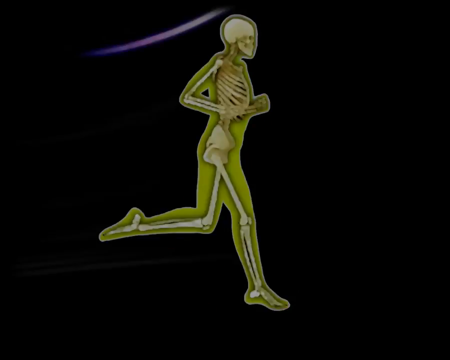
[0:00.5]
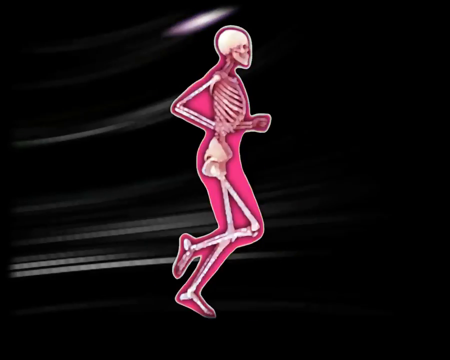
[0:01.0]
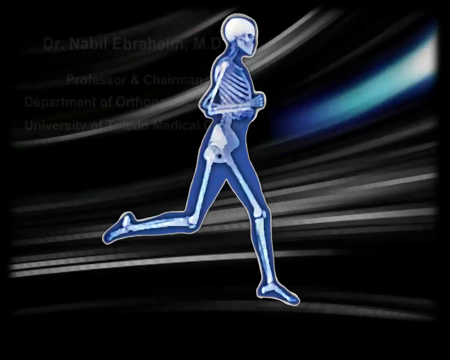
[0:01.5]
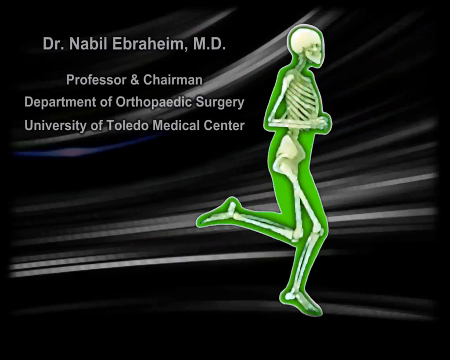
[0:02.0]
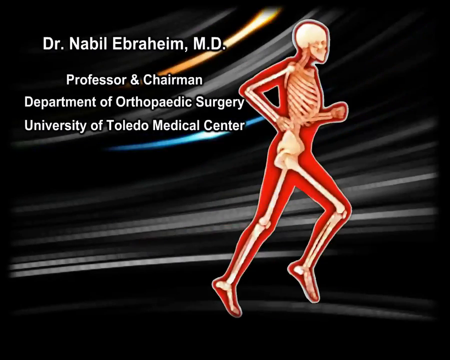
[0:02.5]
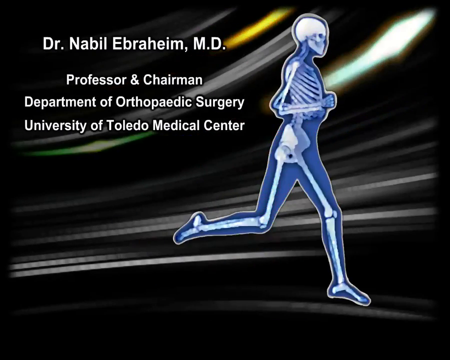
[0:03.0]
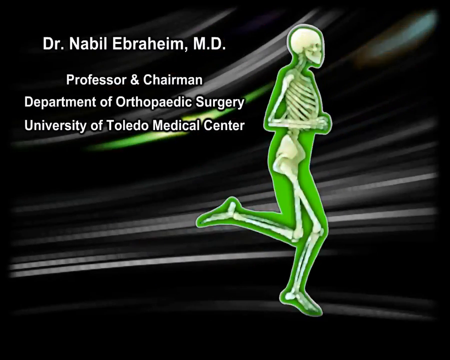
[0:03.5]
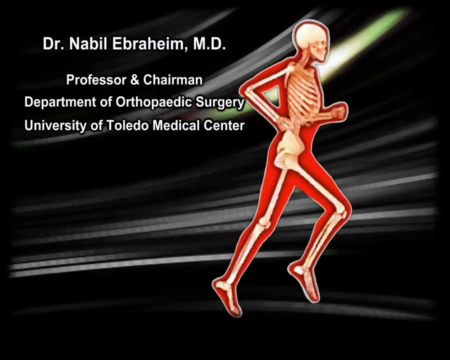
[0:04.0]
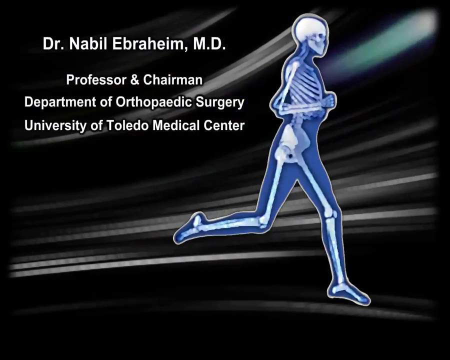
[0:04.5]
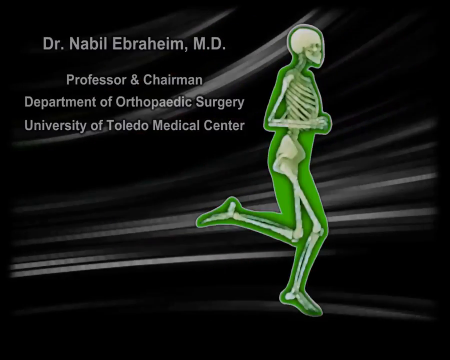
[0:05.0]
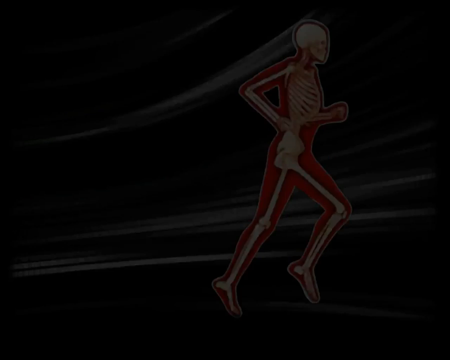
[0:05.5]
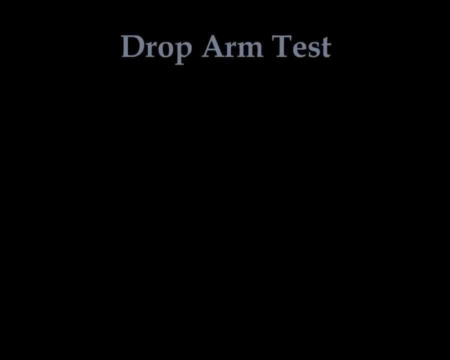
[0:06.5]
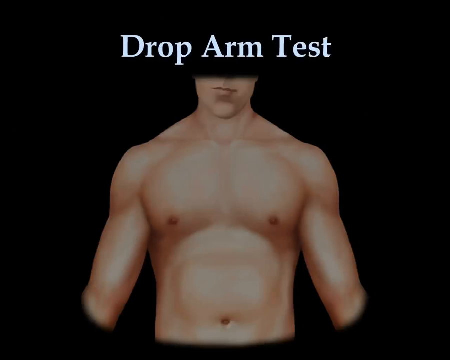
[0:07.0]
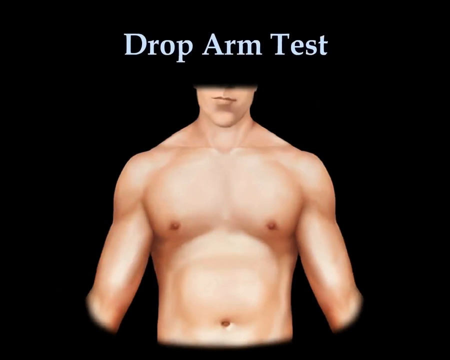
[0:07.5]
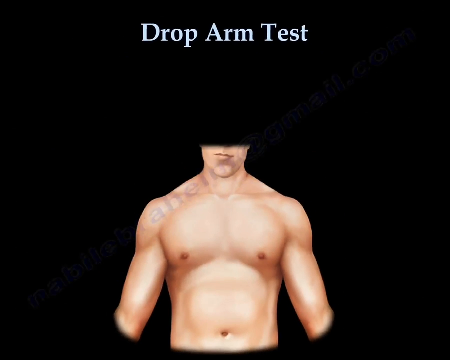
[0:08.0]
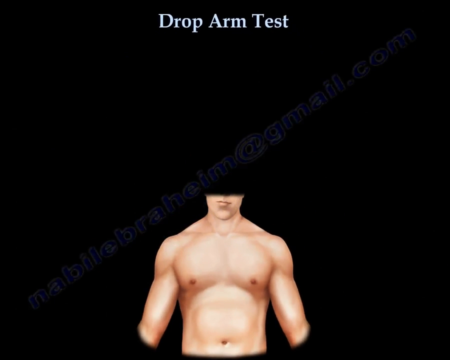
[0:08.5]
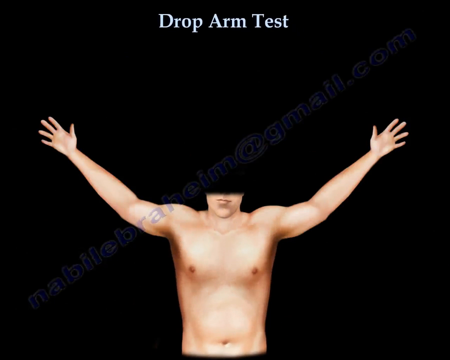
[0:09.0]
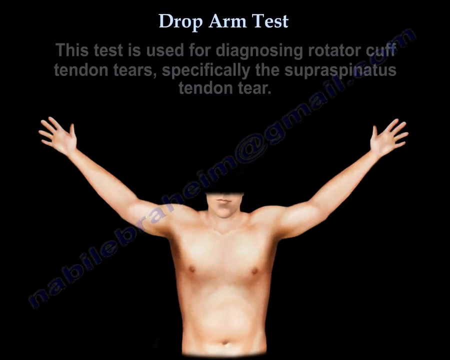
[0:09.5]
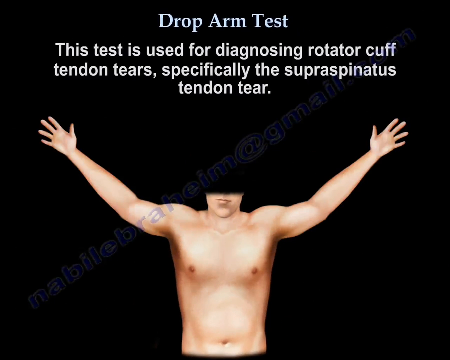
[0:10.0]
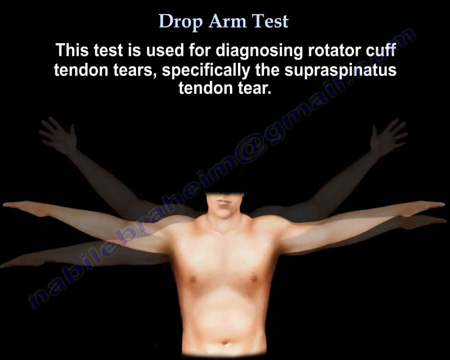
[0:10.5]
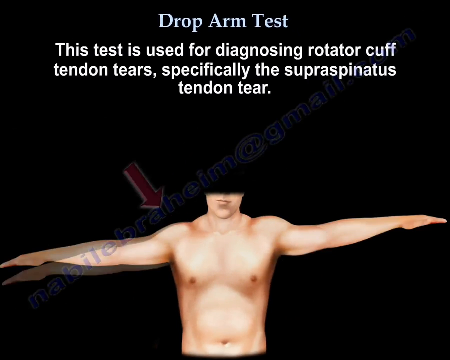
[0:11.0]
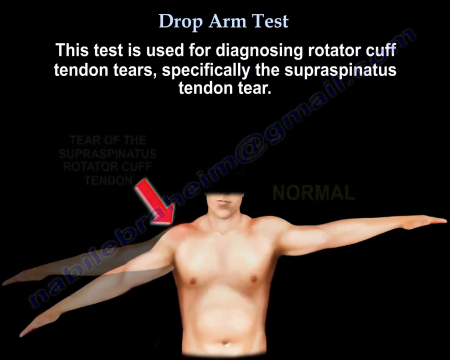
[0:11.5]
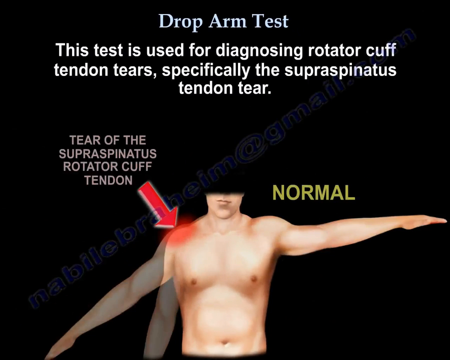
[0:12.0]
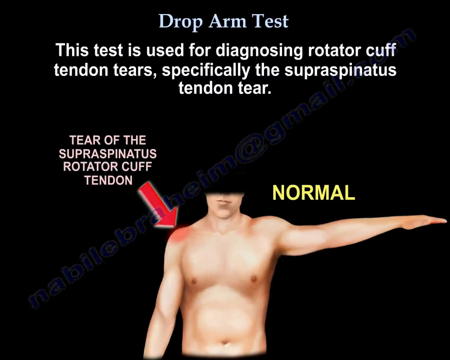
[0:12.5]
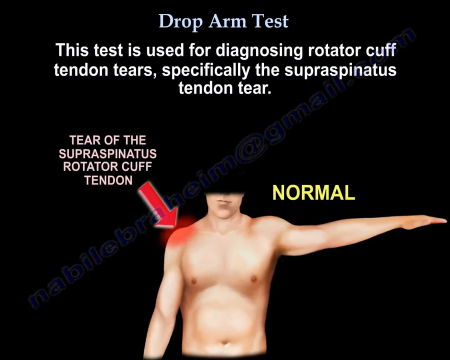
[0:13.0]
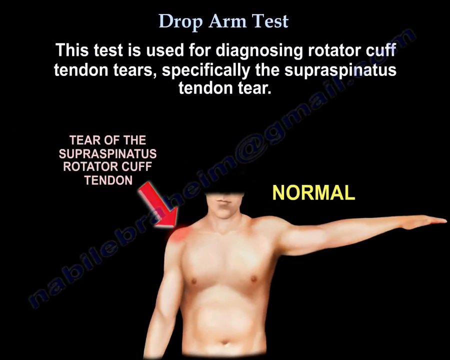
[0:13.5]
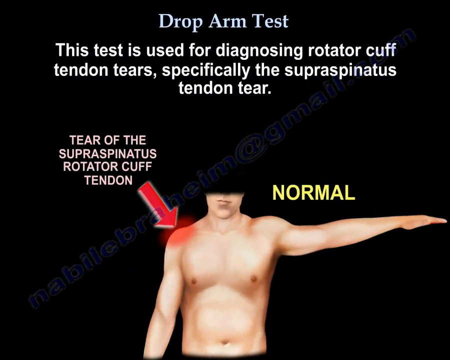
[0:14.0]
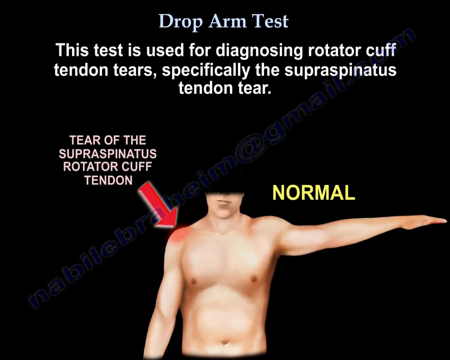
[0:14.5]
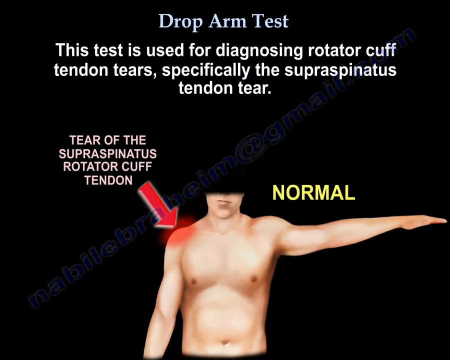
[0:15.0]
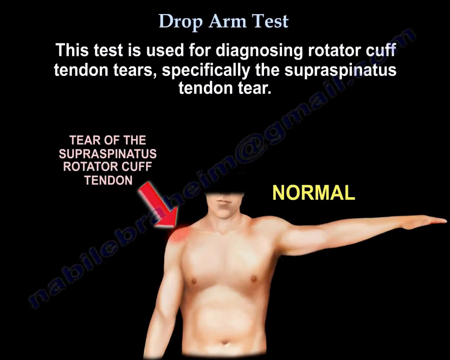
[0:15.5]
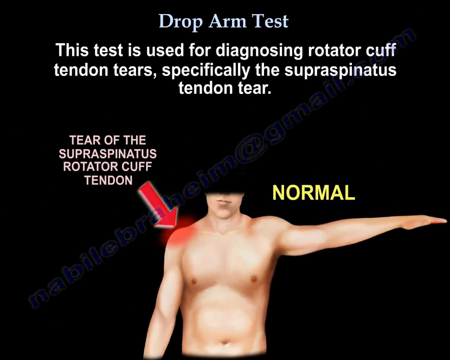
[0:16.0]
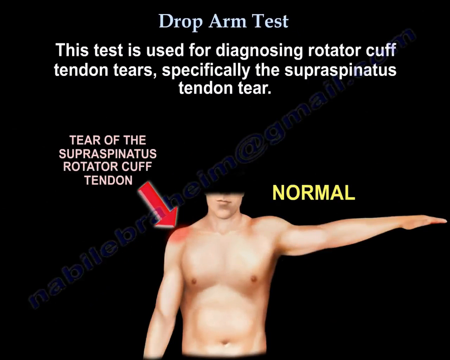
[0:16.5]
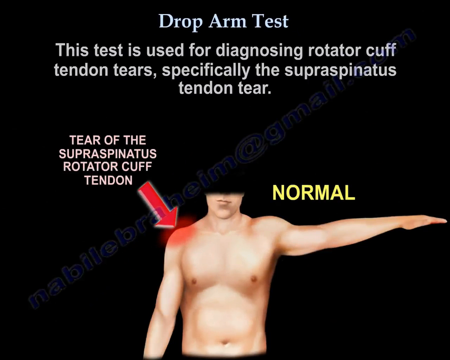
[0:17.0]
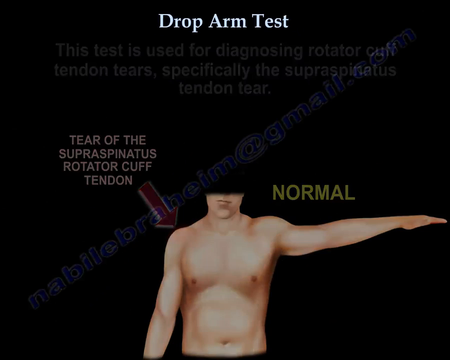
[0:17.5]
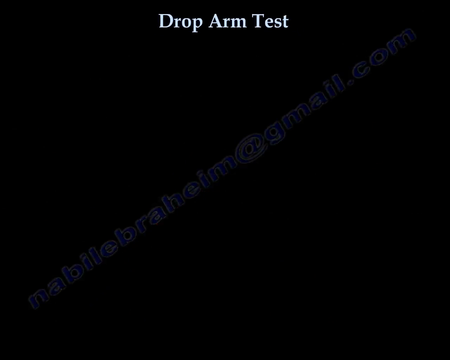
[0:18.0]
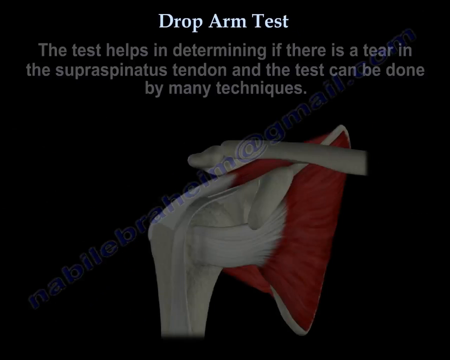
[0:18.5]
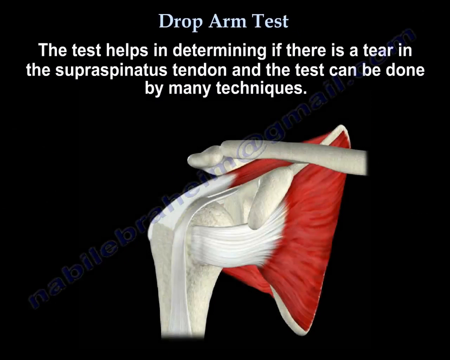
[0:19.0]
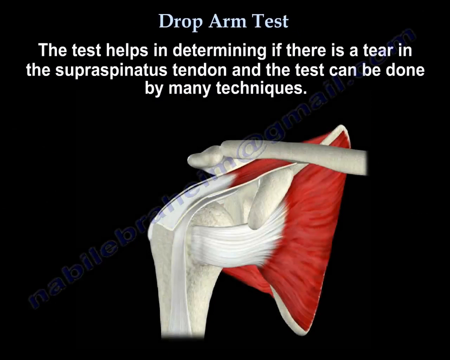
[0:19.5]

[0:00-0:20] An animation shows a skeleton running, with the skin appearing in a red-pink color that changes to green and blue. Text then reads "Dr. Nabil Ebrahim M.D., a professor and chairman of the Department of Orthopedic Surgery." The animated skeleton keeps running. The drop arm test is then shown with an animation of a white, muscular man raising his arms. As his right arm lowers, a red spot appears, marking a tear of the supraspinatus rotator cuff tendon, while the other arm appears normal when held up. An animation of the muscle and this tendon follows, with on-screen text saying the test helps determine if there is a tear in that tendon and that the test can be done by many techniques.